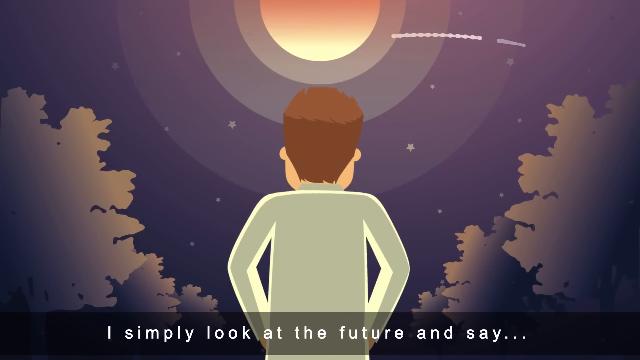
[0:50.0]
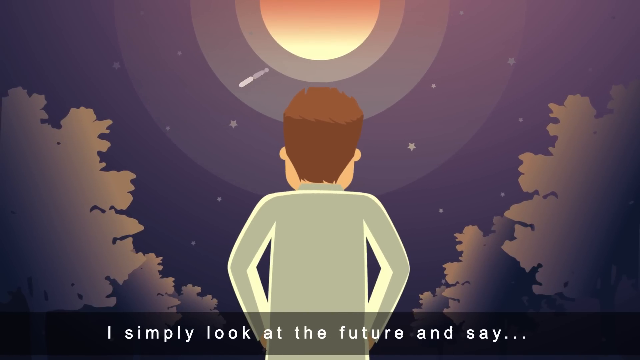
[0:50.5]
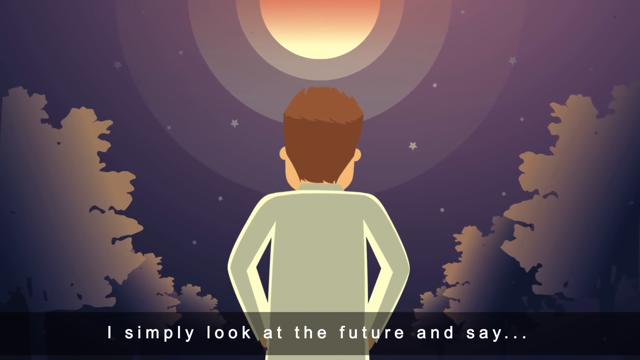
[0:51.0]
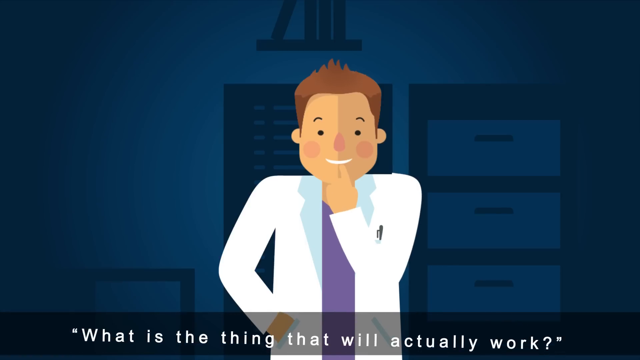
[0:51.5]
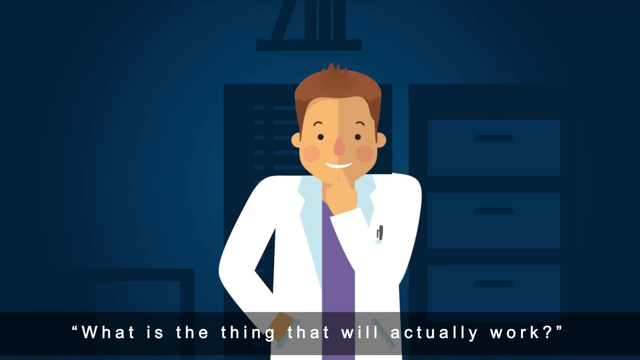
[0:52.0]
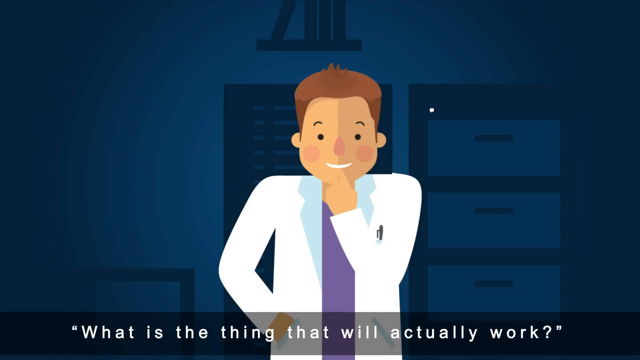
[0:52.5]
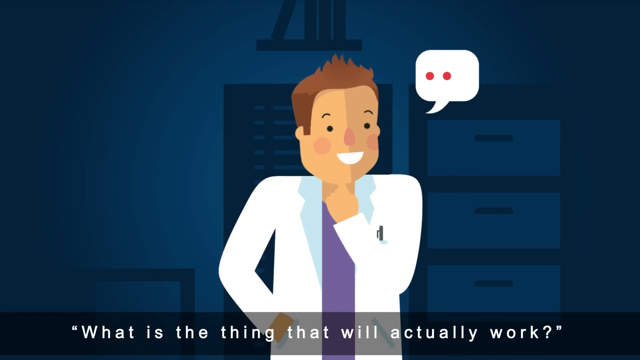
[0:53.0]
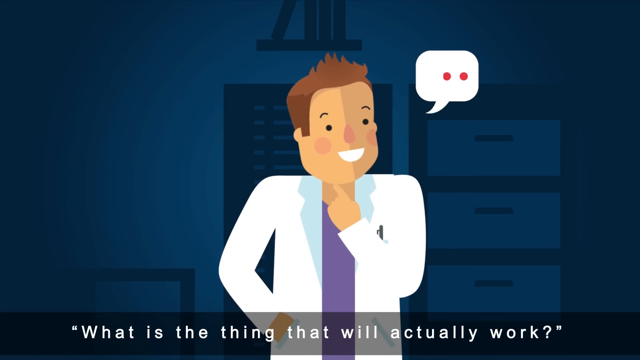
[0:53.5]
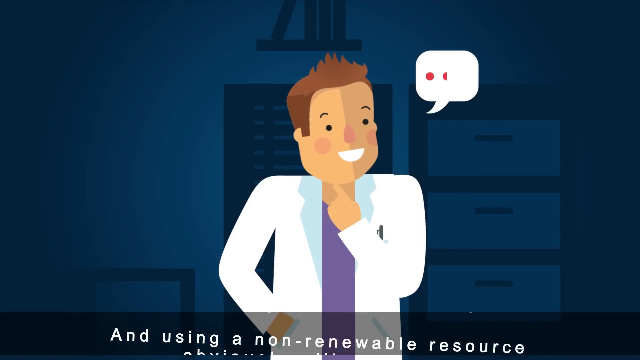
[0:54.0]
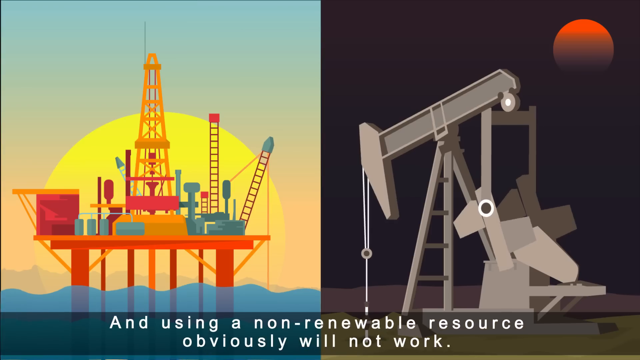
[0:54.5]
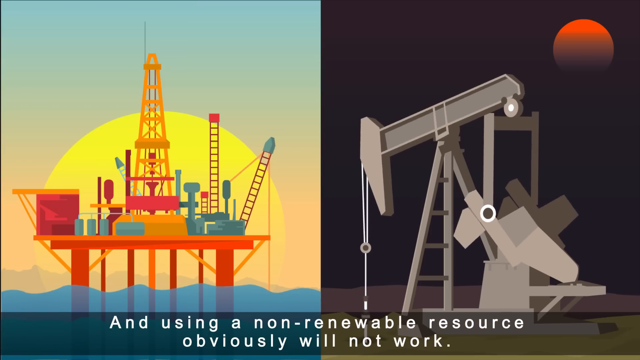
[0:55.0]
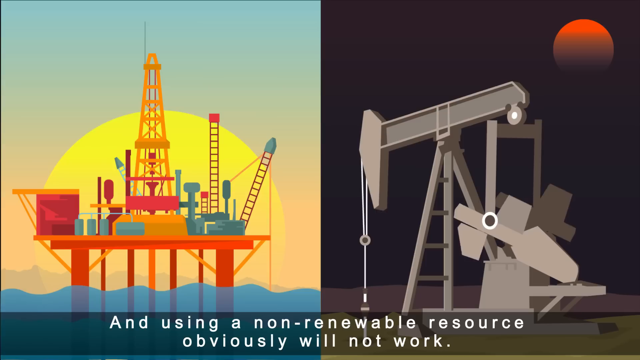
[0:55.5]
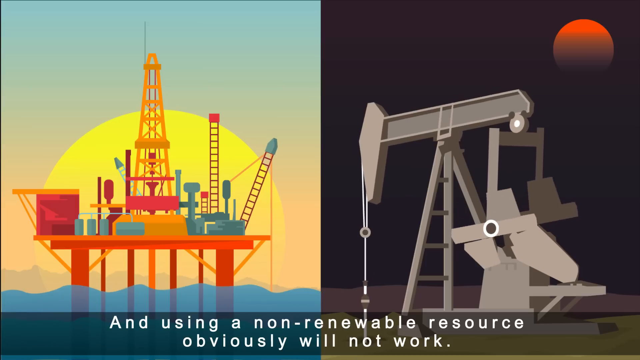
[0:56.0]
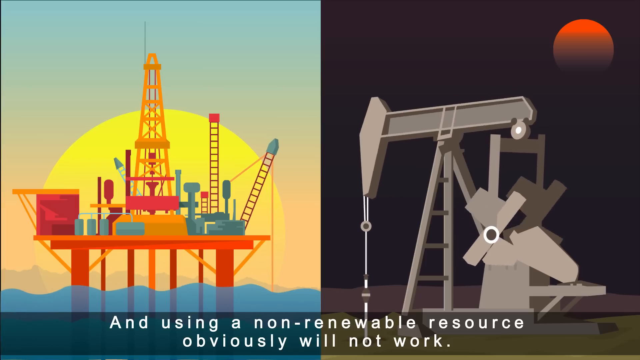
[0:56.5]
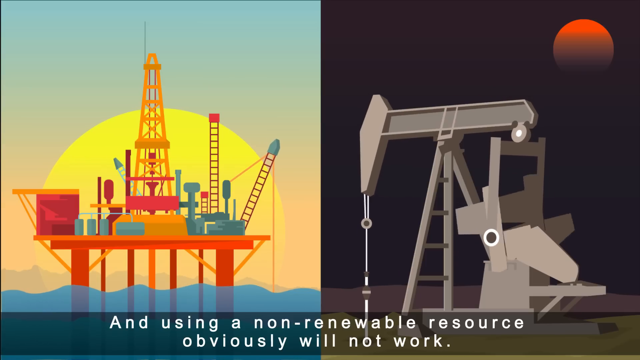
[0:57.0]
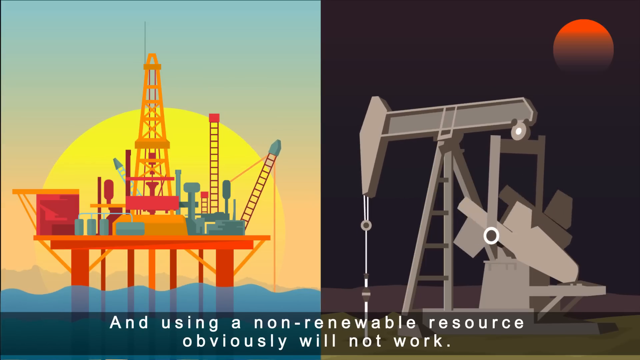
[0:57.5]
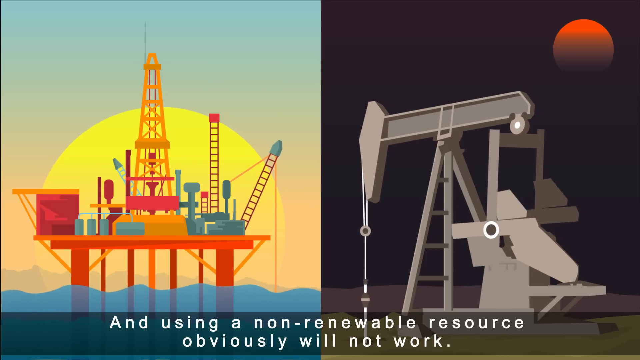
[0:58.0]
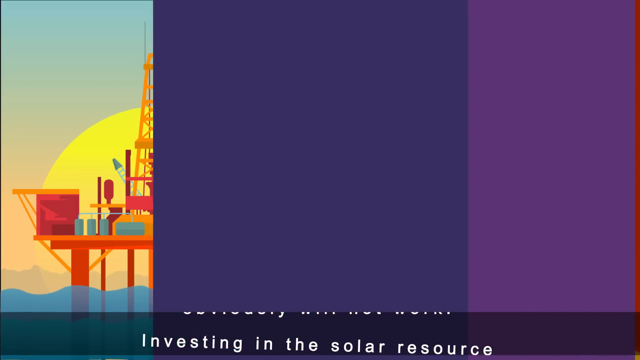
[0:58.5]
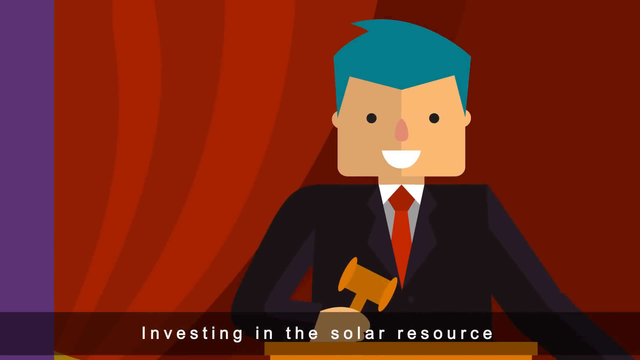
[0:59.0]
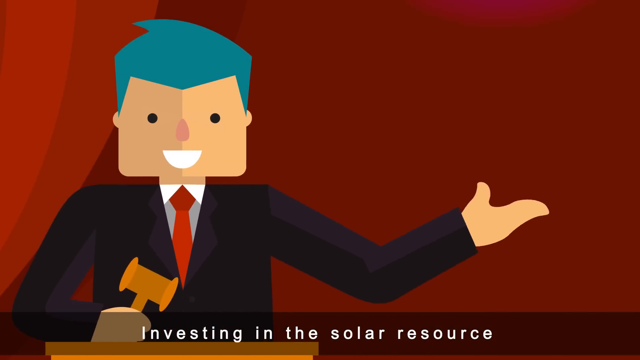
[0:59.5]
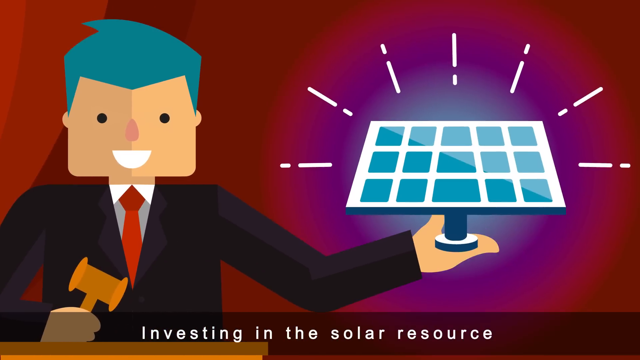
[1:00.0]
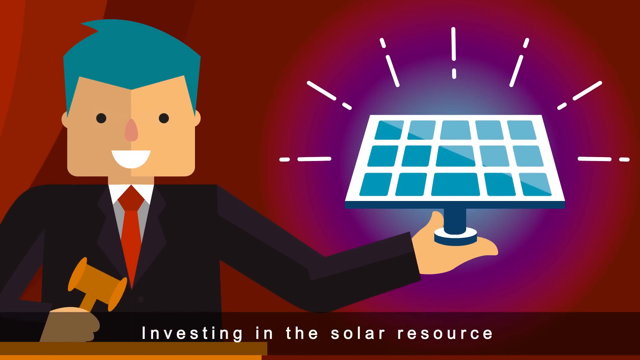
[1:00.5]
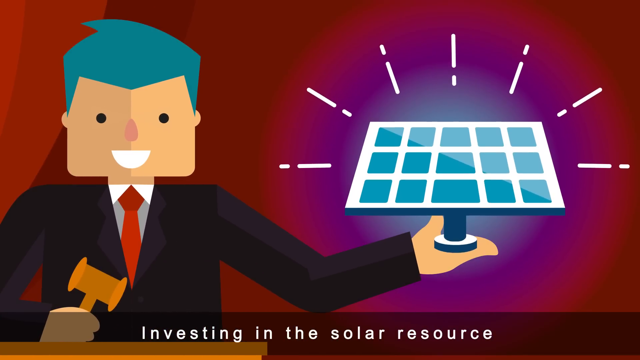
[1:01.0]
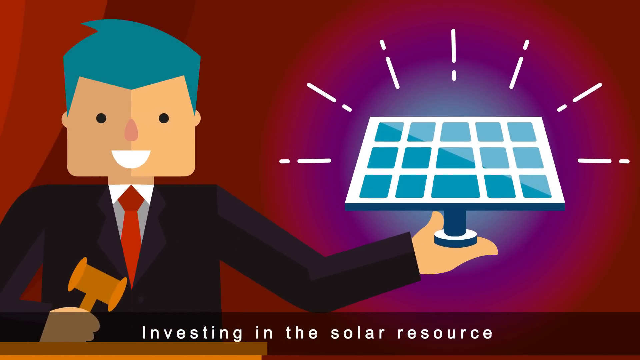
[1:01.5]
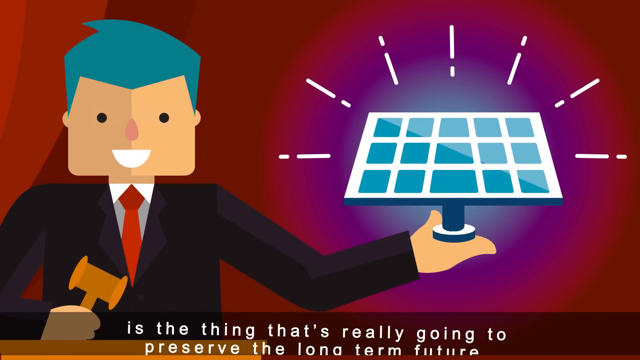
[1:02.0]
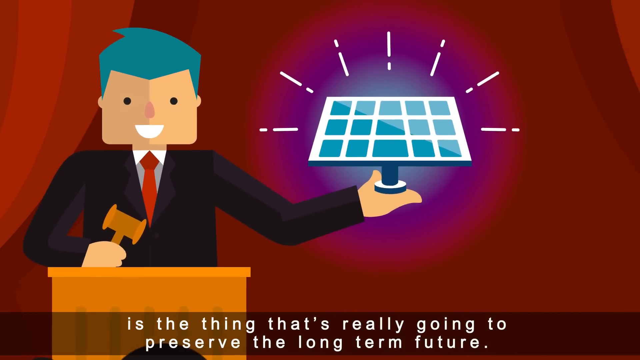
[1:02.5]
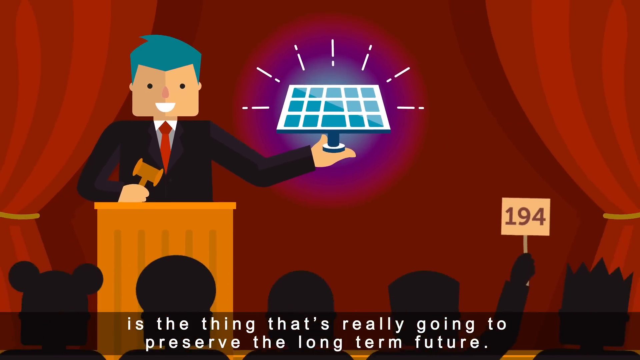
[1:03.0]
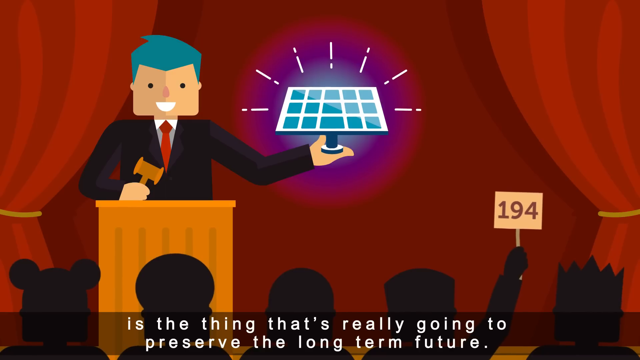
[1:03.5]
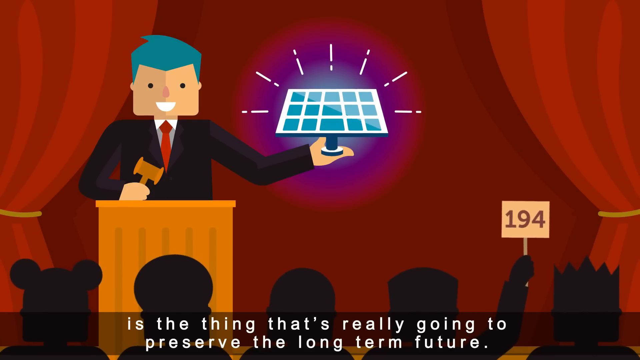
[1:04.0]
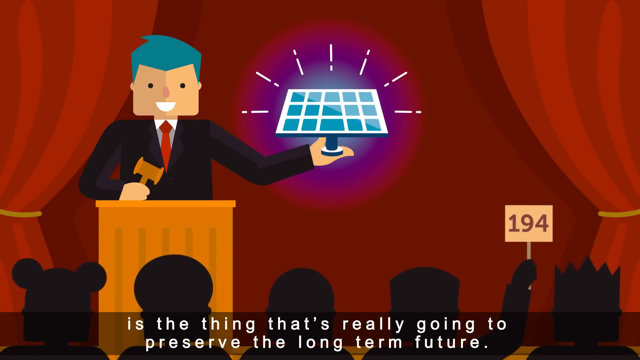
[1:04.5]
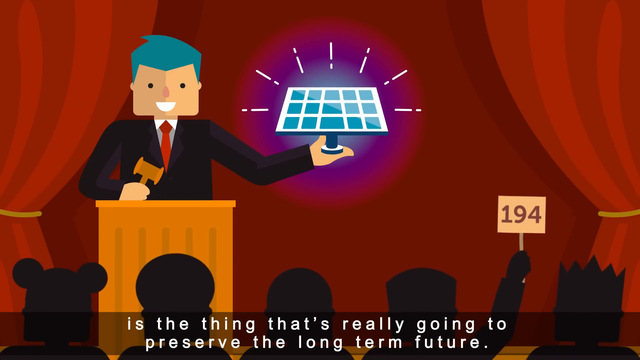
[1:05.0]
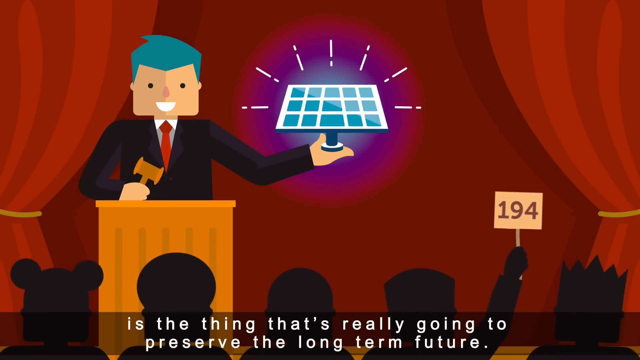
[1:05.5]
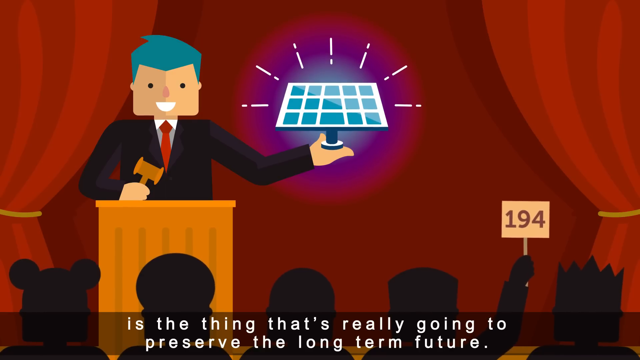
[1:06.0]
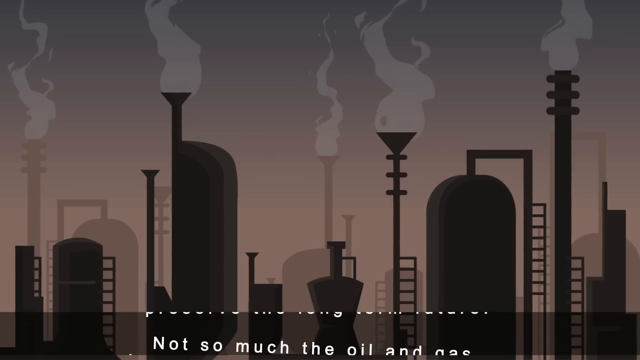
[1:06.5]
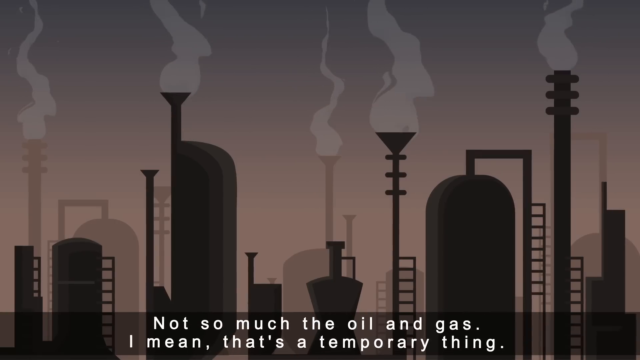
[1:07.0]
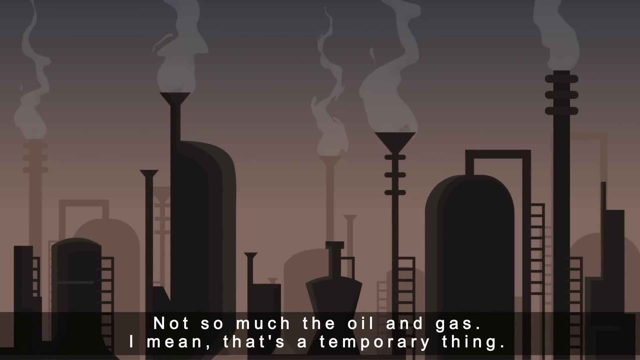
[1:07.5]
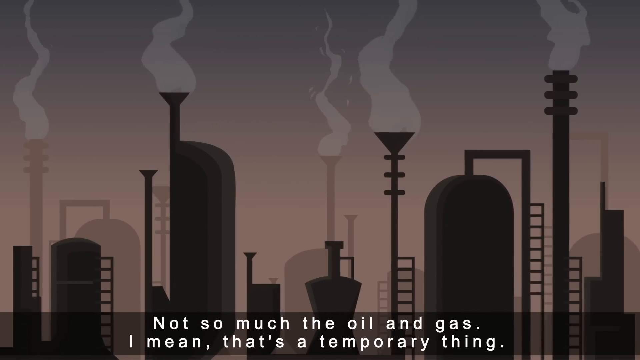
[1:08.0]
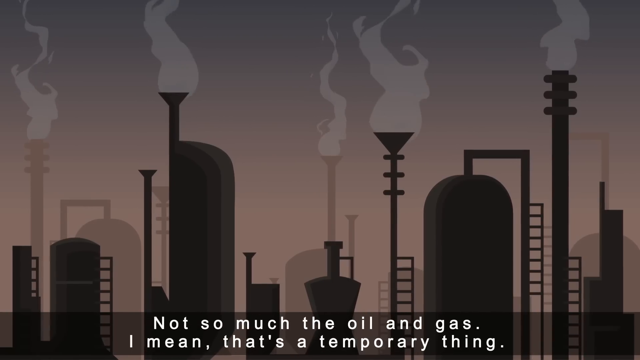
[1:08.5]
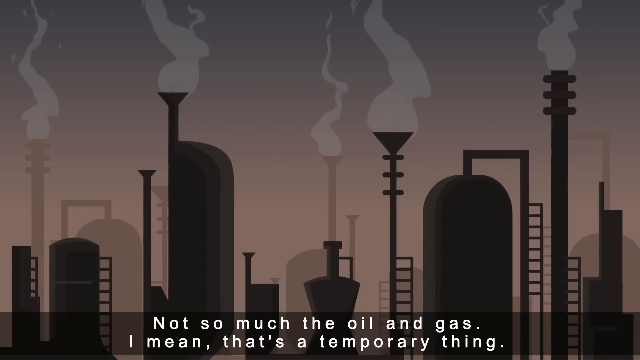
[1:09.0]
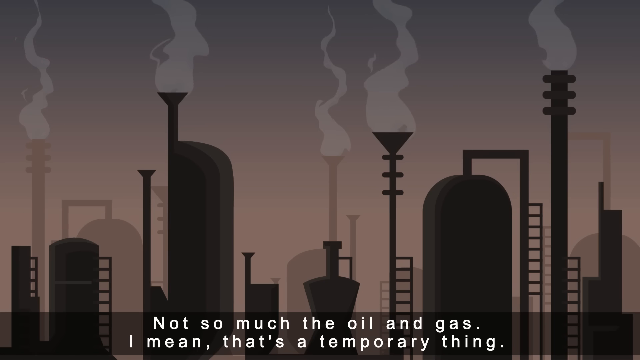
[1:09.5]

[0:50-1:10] Elon Musk is seen from behind, showing the back of his head and his back. His arms are bent at the elbow but still down at his sides, and it looks like he may have his hands in the pockets of his lab jacket. He is standing outside looking up at the moon. A shooting star and some other stars are scattered about in the sky. The moon is glowing orange and yellow, with an aura around it that looks like three circles. On either side of the frame are silhouettes of large mature trees growing. Next, Elon is back in his office. It looks like he comes up with an idea as a bubble pops up at the side of his head. His right arm is down at his side, bent at the elbow with his hand in the pocket of his lab coat. His left arm is bent at the elbow with his hand up to his chin, his fingers folded in and his index finger pointed up. He is smiling and looks like he is coming up with an idea. He looks over to the side at the bubble, and three pink dots pop up in the bubble, as if the idea is forming in his mind. Next, one side of the frame shows the sun rising, a blue sky, and scaffolding on top of some sort of structure, with scaffolding and ladders; it looks like it may be a construction site. The right side of the frame has a black background with an orange moon in the upper right corner and some scaffolding or other machinery that is moving up and down, with what looks like sort of a windmill in front of it. Next, a cartoon character is standing on a red stage behind a podium. They hold a mallet in their right hand, gripping the handle with their fingers pulled into the palm, sort of like a fist. Their left arm is outstretched from their body, bent at the elbow, palm facing up, holding a solar panel in the palm of the hand. Seven white lines move away from the solar panel, and around it is a turquoise aura, then a purple aura, surrounded by a red aura, seemingly emphasizing the power the solar panel is capable of generating.